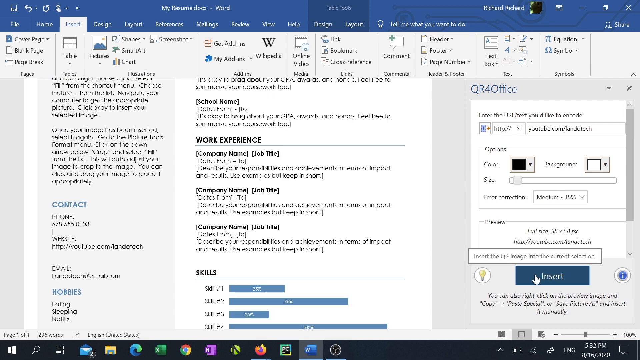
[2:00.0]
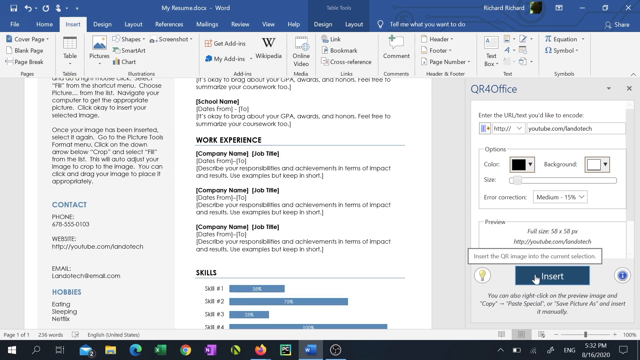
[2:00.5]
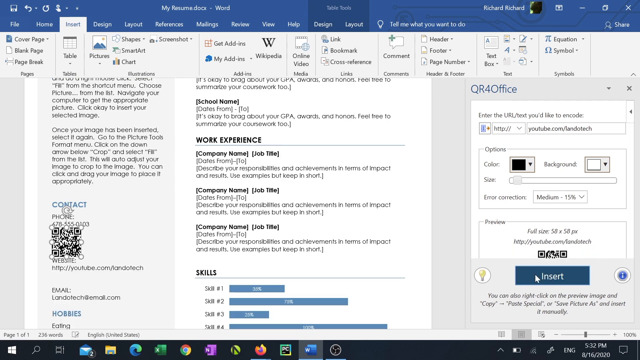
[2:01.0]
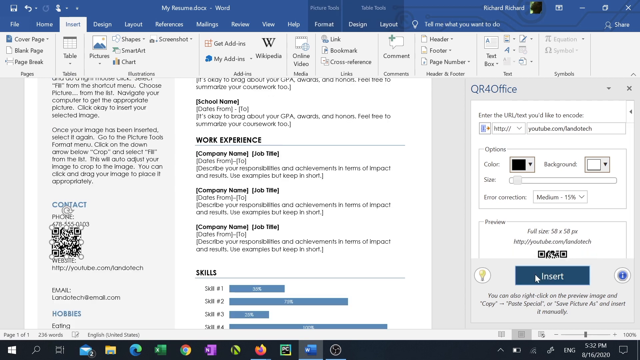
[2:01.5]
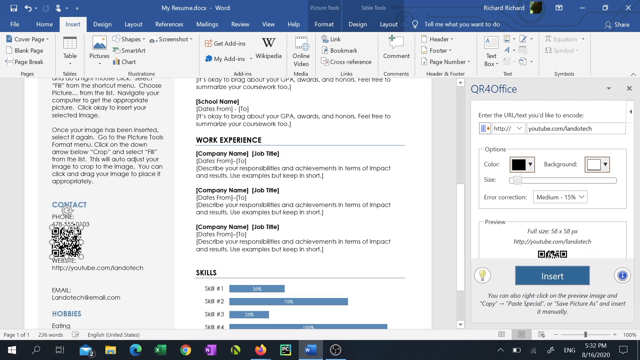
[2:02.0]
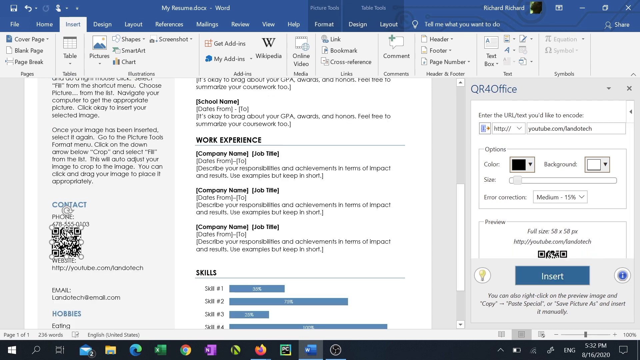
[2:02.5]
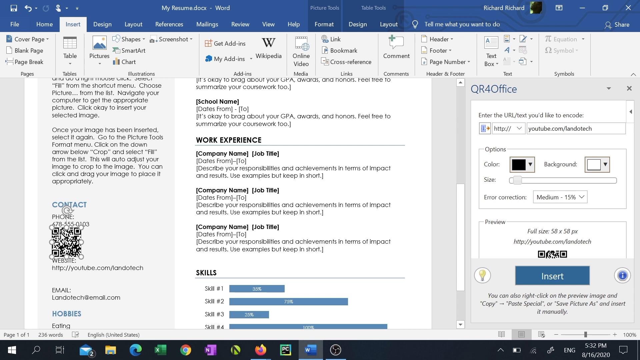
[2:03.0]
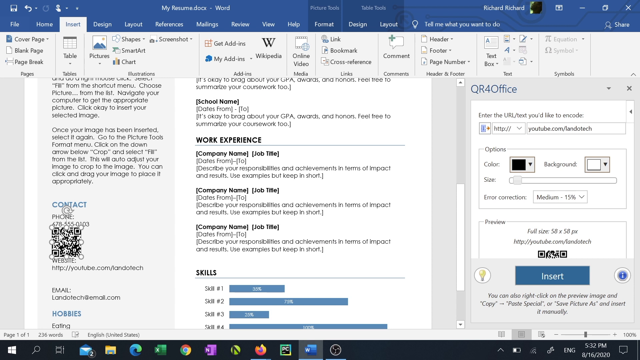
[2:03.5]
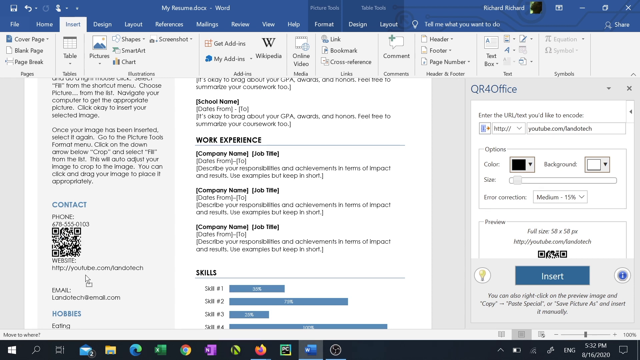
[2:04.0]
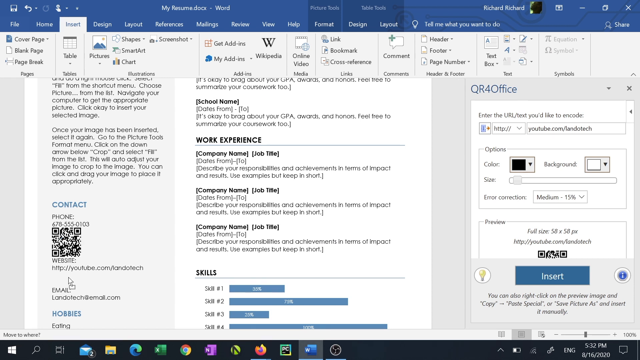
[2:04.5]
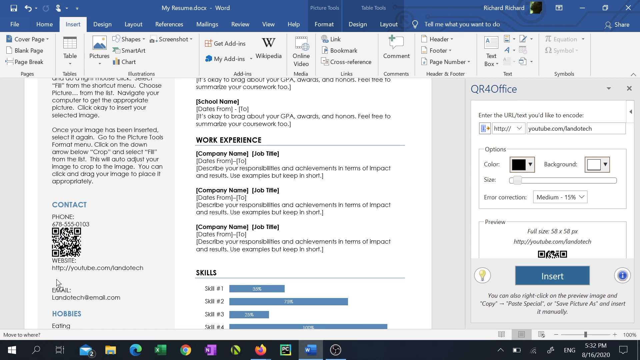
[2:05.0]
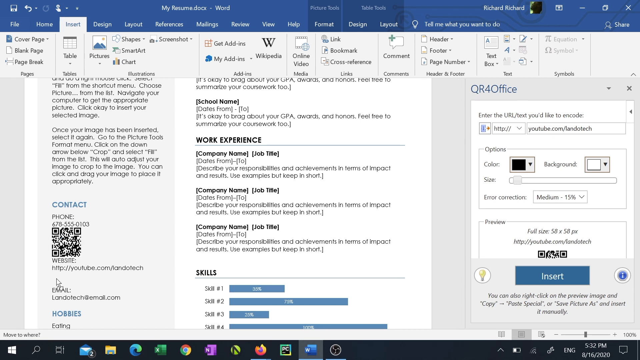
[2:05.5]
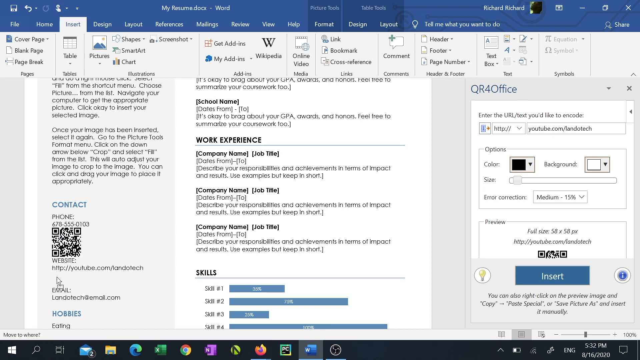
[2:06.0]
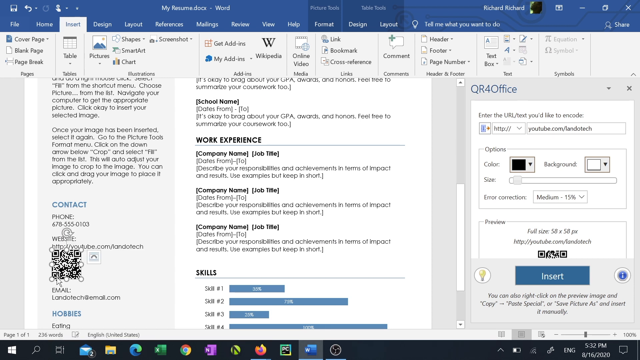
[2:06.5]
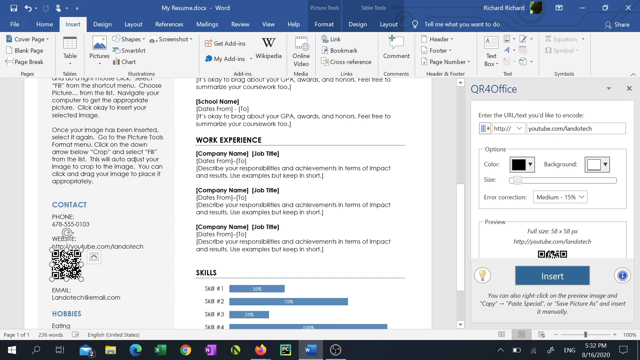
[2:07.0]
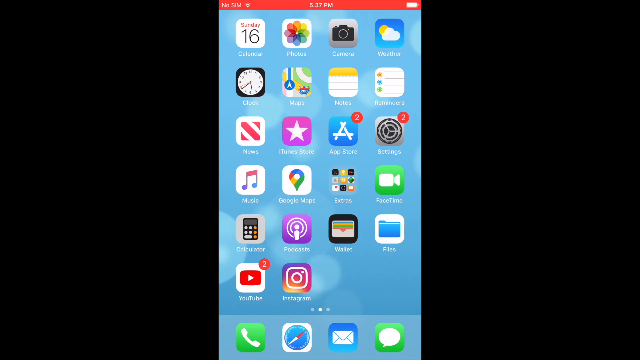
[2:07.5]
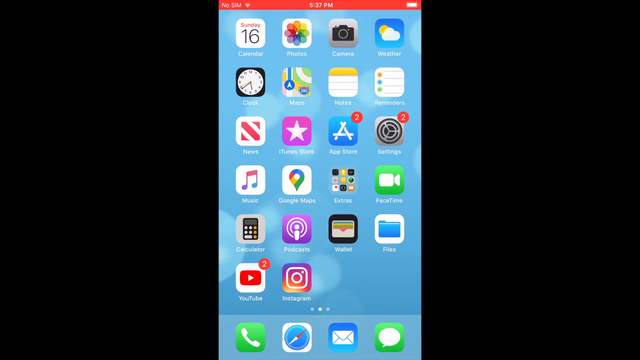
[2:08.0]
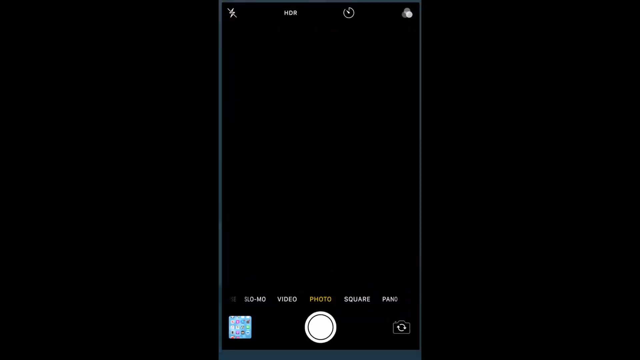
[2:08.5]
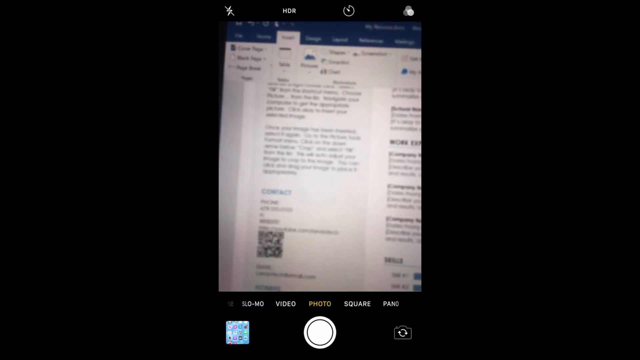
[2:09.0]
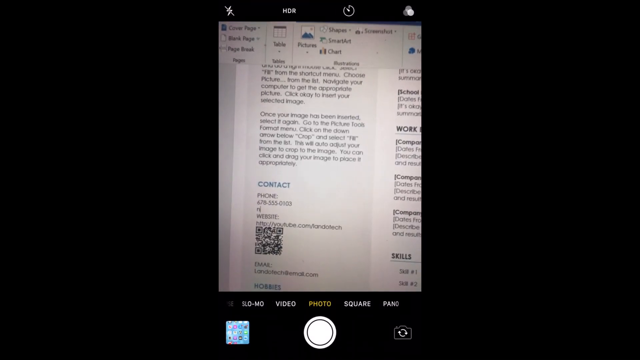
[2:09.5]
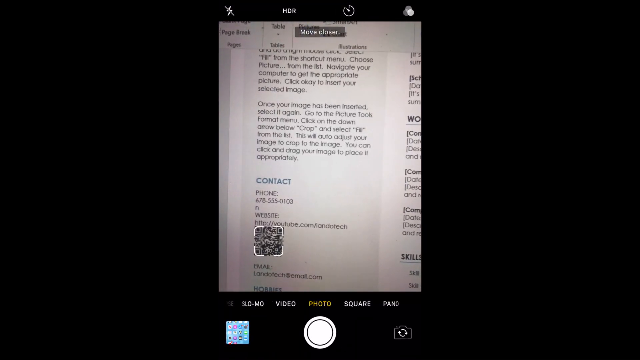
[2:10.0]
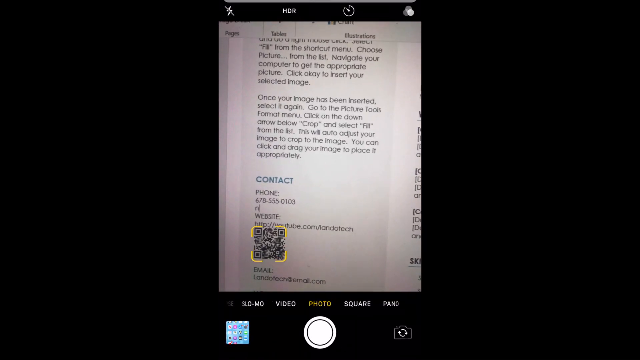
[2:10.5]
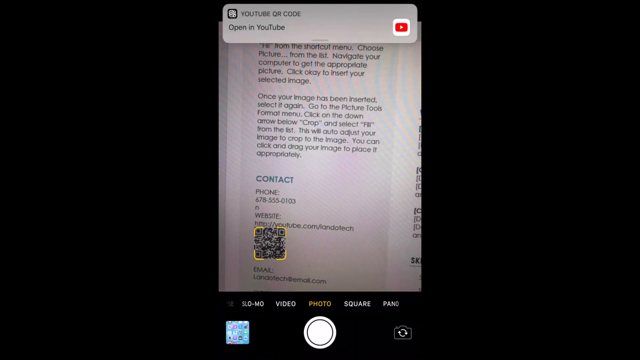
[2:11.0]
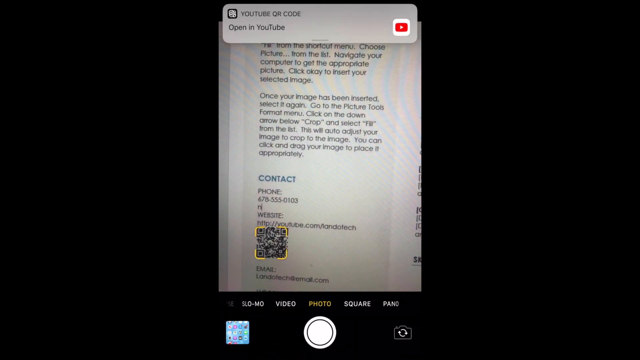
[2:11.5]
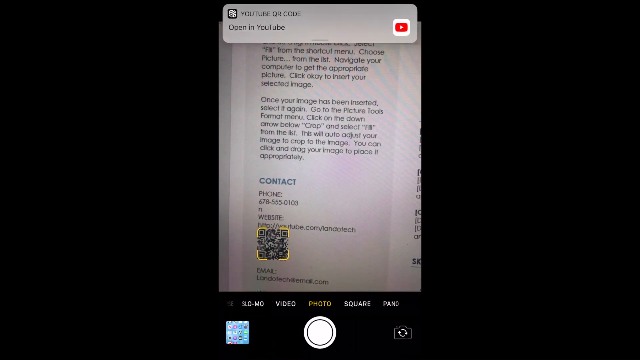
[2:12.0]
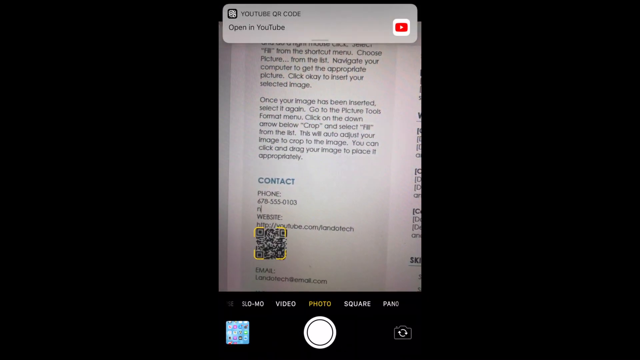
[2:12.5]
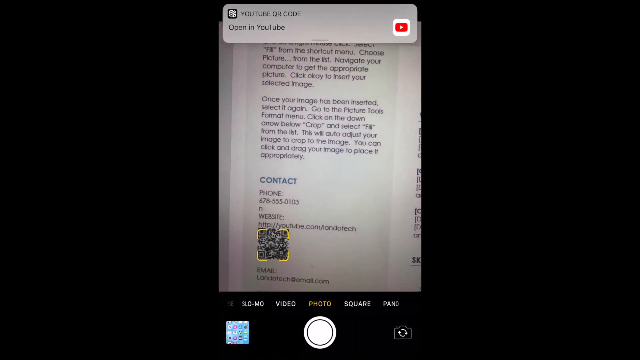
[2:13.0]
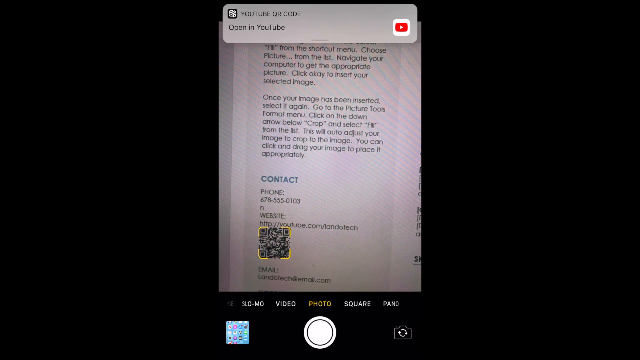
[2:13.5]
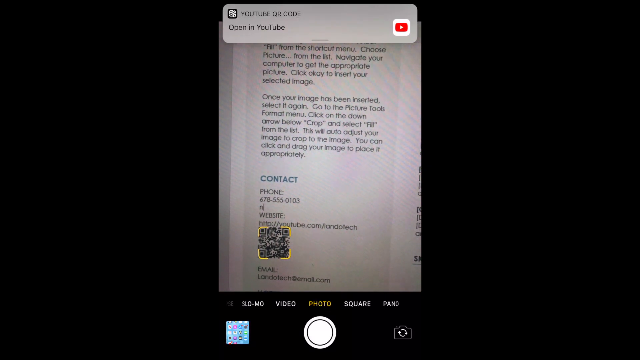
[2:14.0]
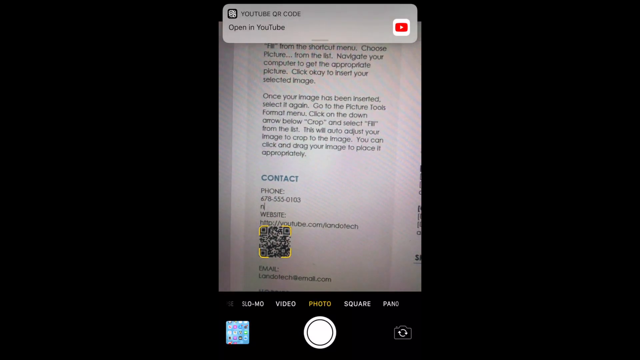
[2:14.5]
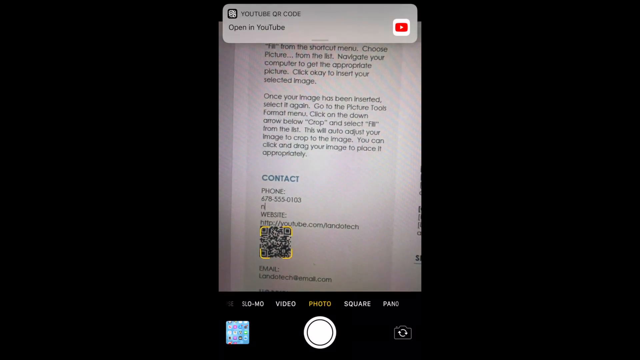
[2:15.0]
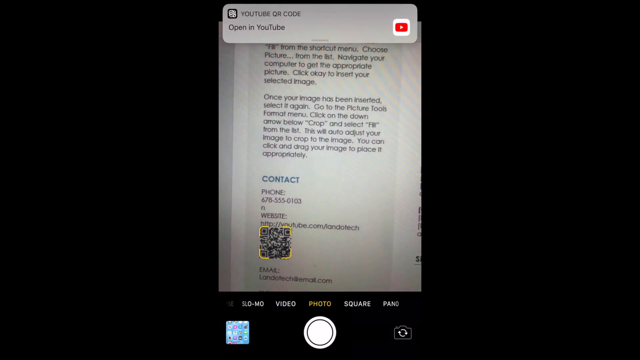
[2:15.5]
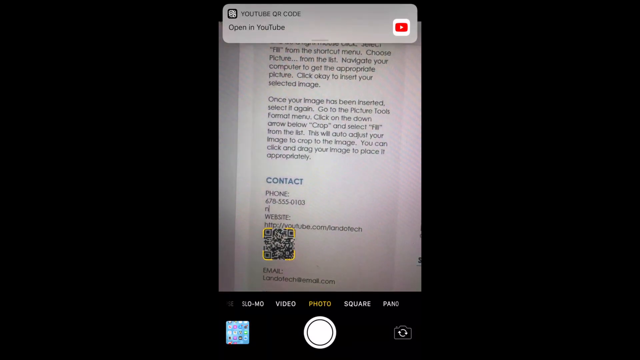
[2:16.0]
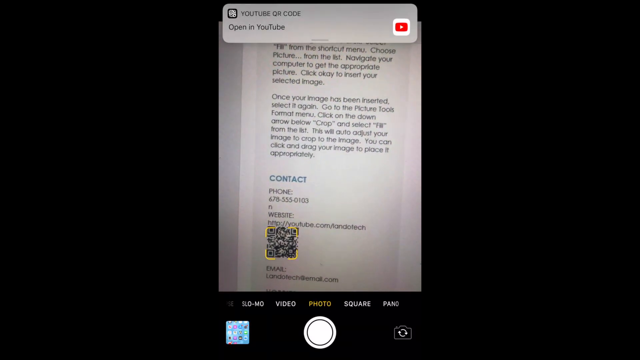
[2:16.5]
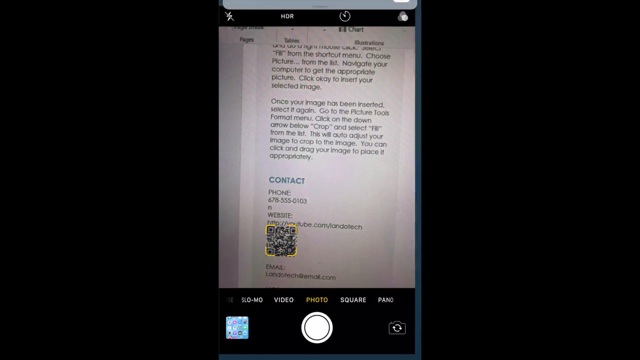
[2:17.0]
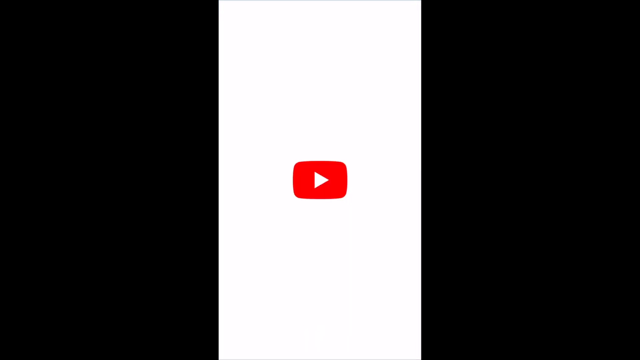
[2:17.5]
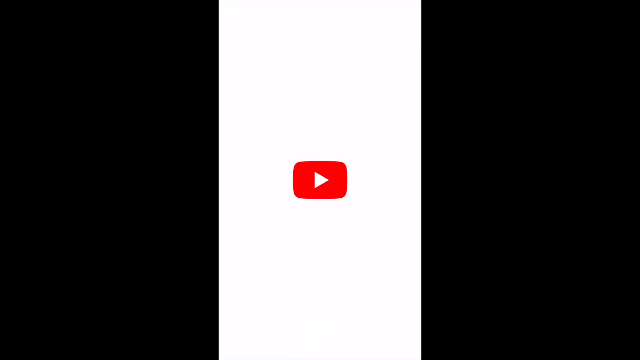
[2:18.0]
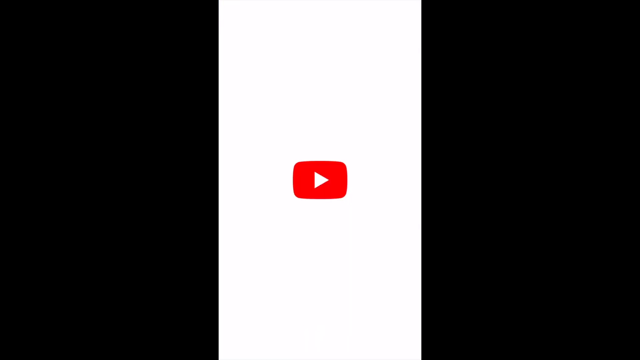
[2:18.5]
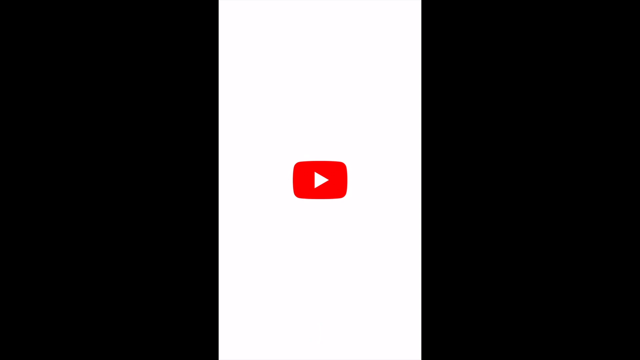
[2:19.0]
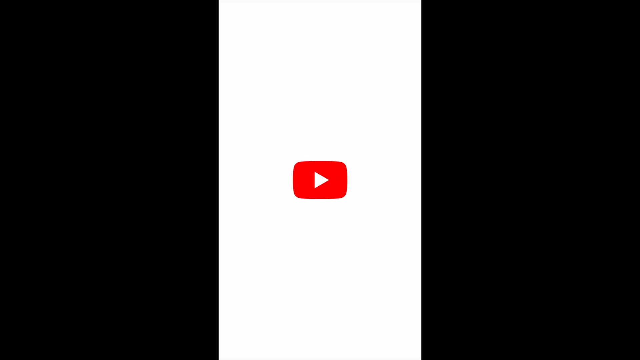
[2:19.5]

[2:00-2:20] In Microsoft Office, a section on the right-hand side of the screen says "QR for Office", and a person clicks a button labeled "Insert", above which it says "Insert the QR image into the current selection". The person is working on some sort of pamphlet template, with many categories and selections across the top. Above the Insert button are a QR code and some other options. A QR code appears on the left side of the screen, and the person goes to it with the cursor and moves it down. Suddenly a cell phone's home screen with many apps appears, an app is selected, and the phone screen kind of disappears into what seems to be camera mode, with the camera focused on the Microsoft Word document and specifically on the barcode. A notification appears at the top saying "YouTube QR code open in YouTube" with a YouTube symbol on the right side, and the view kind of zooms in on it. YouTube then opens, showing a YouTube player with a blank screen.